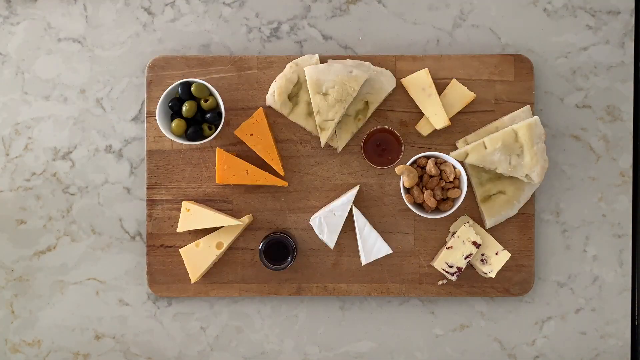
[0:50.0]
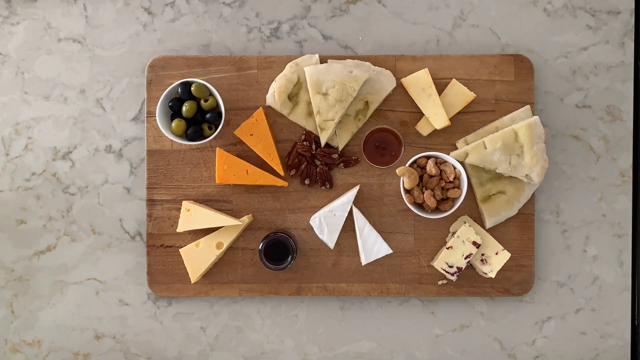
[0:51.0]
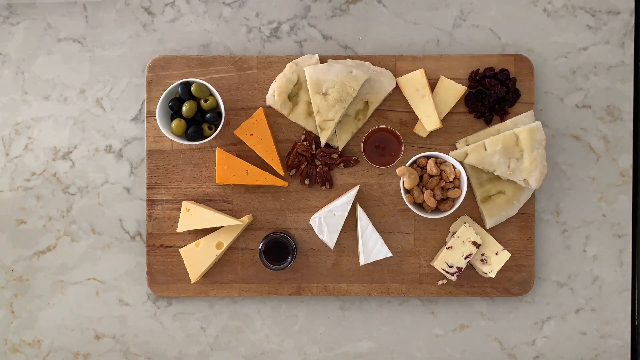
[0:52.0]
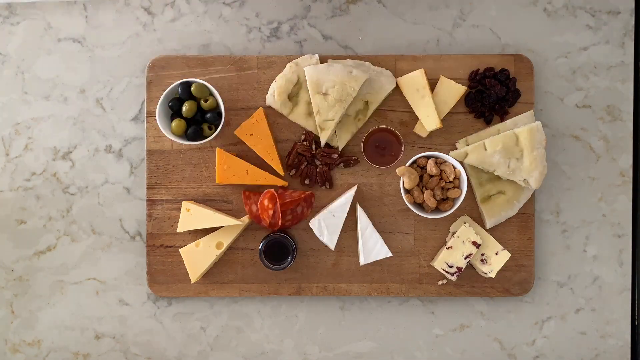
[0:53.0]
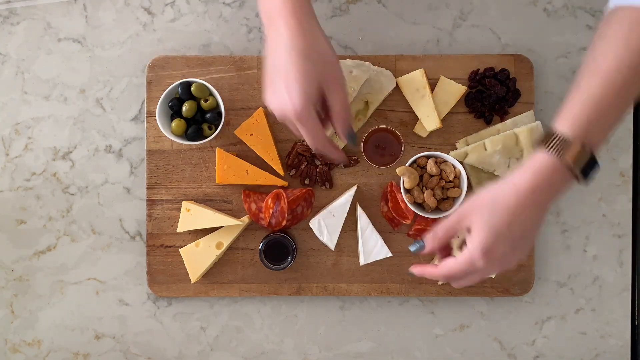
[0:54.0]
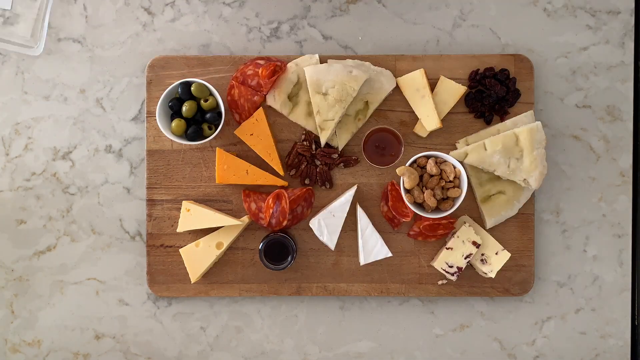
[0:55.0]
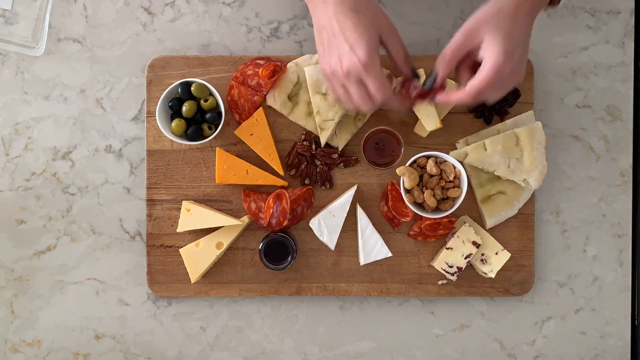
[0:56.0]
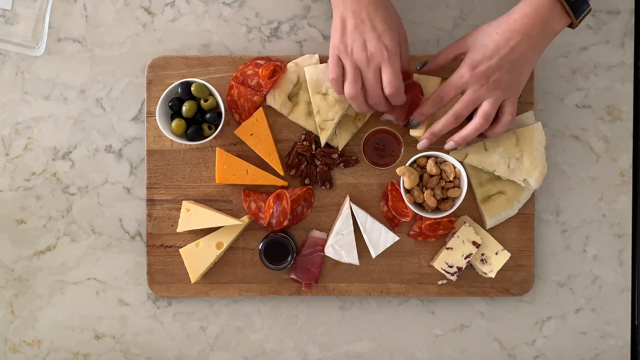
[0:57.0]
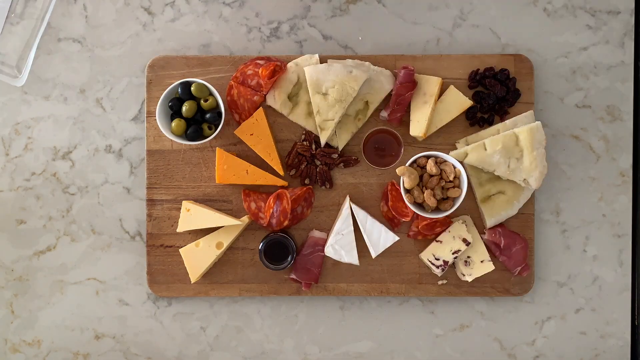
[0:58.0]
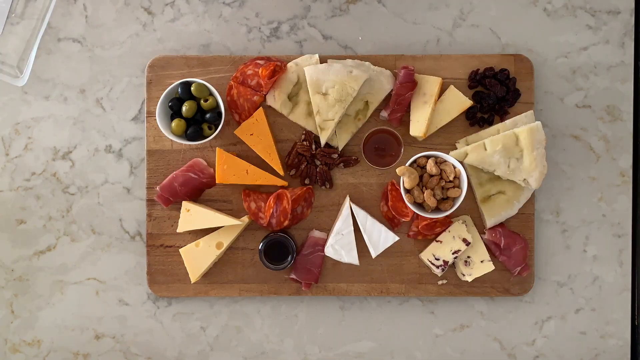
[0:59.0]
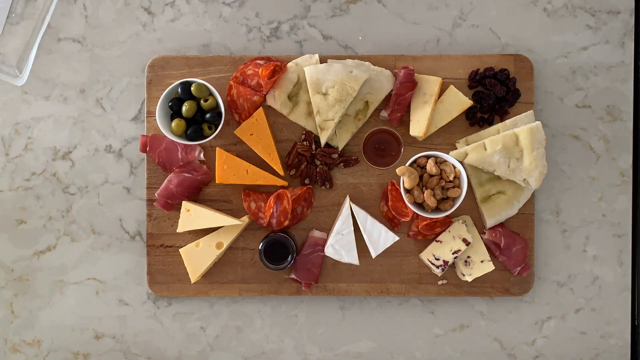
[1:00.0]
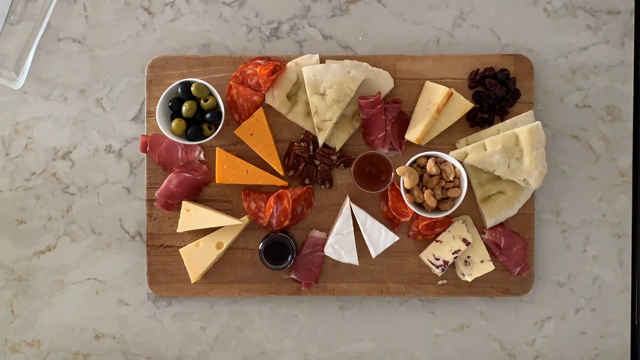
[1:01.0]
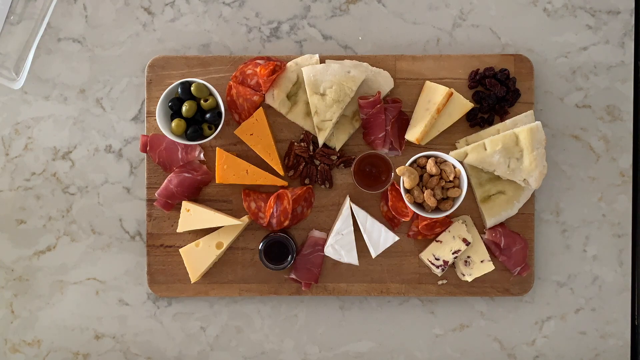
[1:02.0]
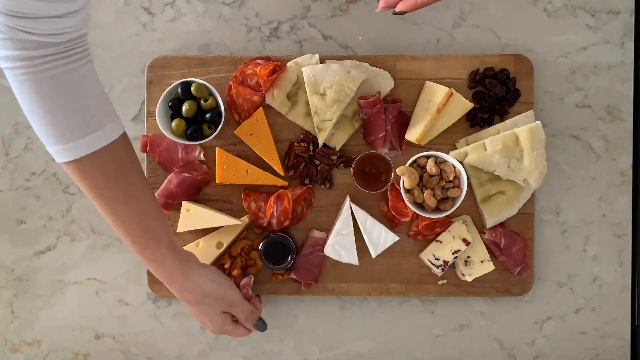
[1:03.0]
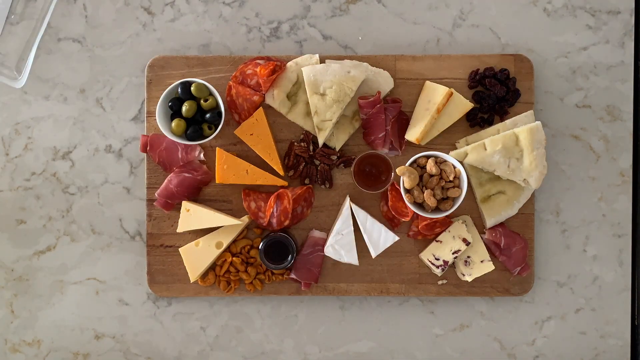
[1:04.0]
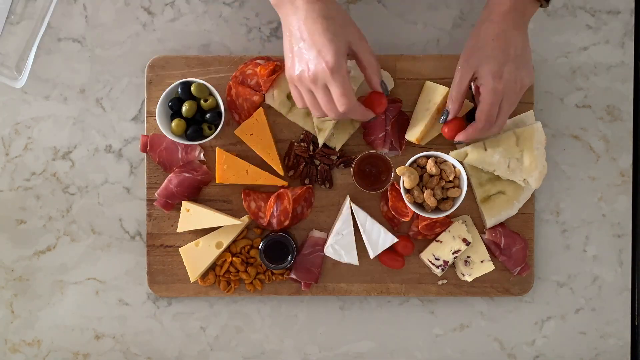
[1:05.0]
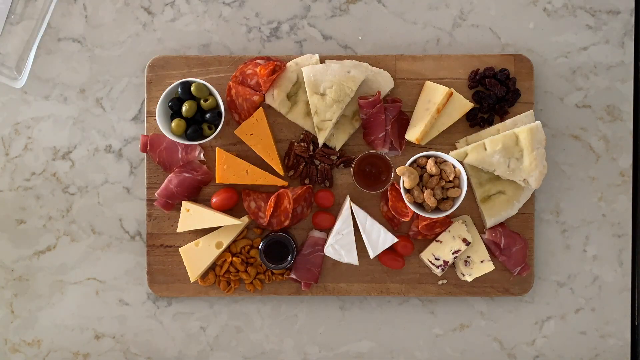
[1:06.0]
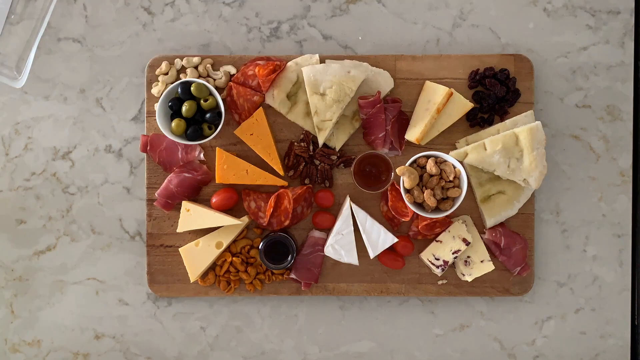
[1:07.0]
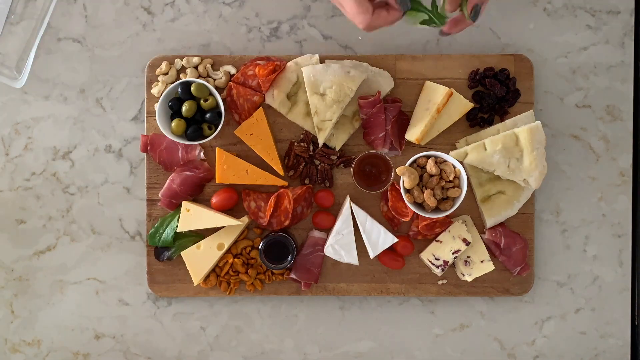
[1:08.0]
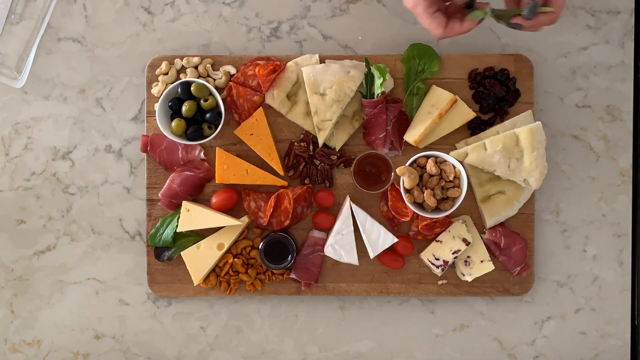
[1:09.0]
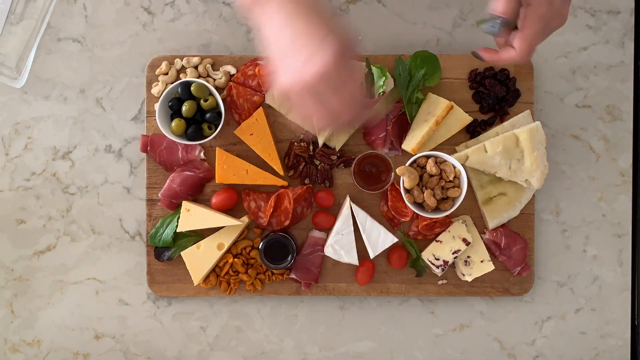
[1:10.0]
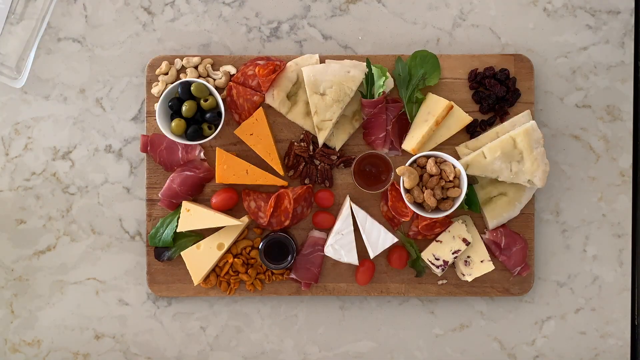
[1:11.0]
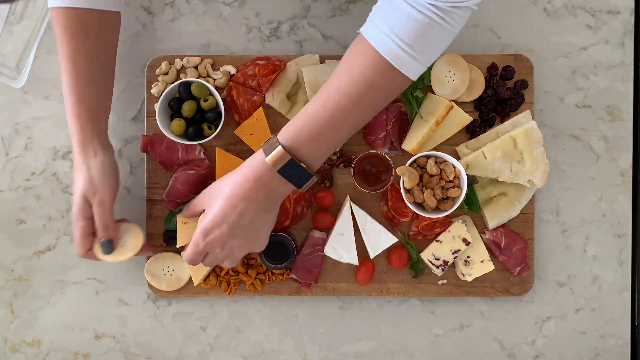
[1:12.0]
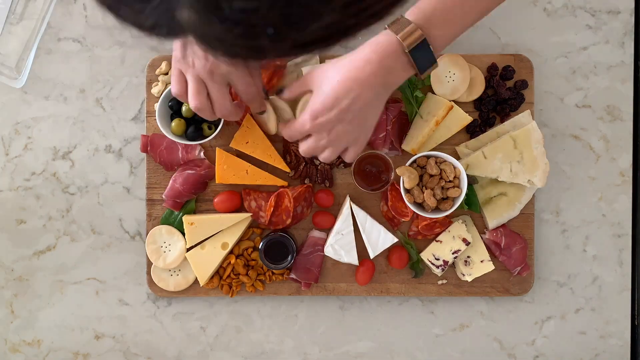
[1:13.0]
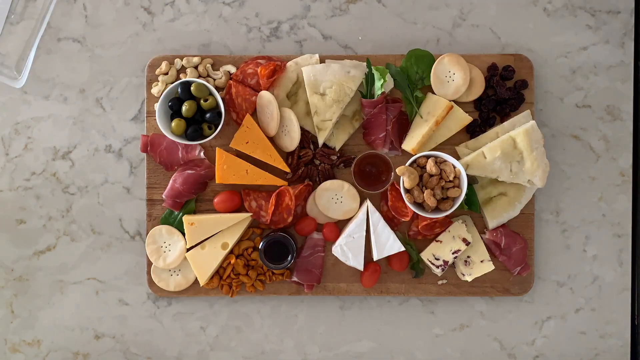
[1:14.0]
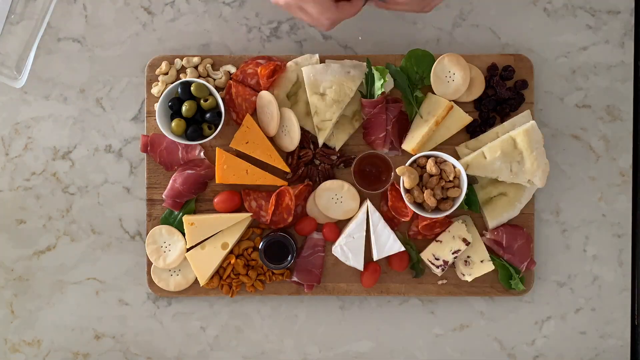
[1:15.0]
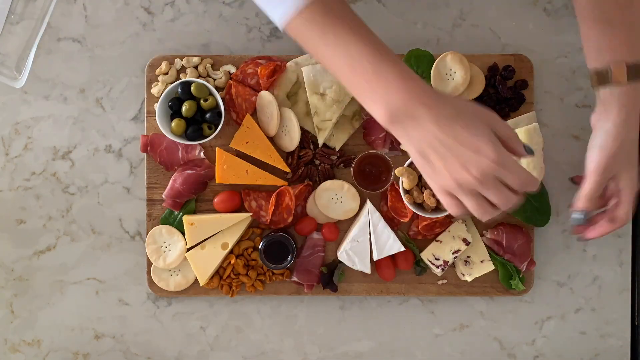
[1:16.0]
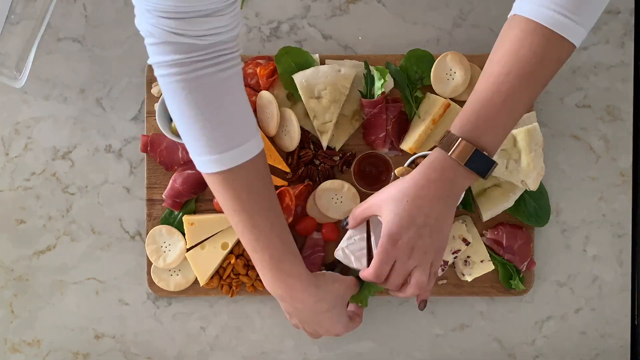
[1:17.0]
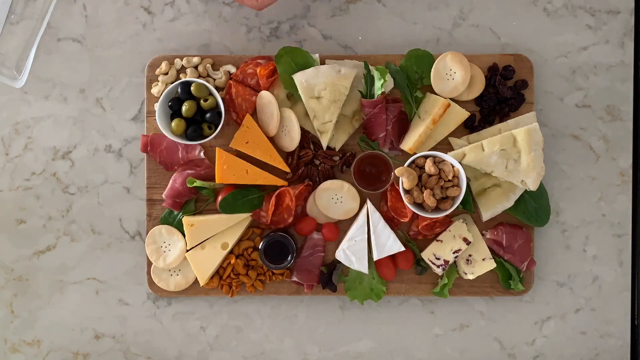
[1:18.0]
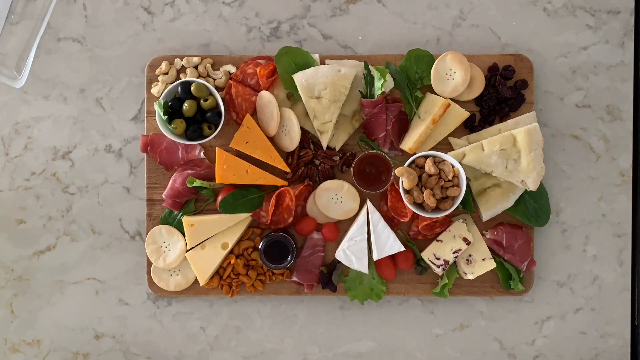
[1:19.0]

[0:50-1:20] The large brown cutting board is shown, full of different cheeses, all cut into triangular slices, along with pieces of pita also cut into triangular shapes. The person adds a cup of what looks like olives, a cup of nuts and other small cups of sauces to the platter. Sliced deli meat is added, along with raisins or cranberries in the top right-hand corner of the platter. The platter includes many types of cheeses, deli meats, olives, nuts, raisins or cranberries, sauces and vegetables. Even when the board seems full, the person makes room to add leaves as garnish and to add peanuts and cashews on the corners of the cutting board.